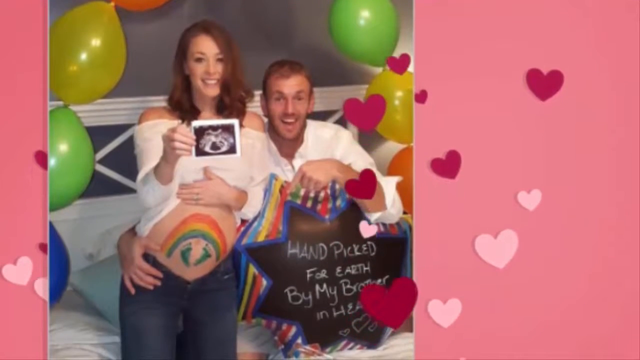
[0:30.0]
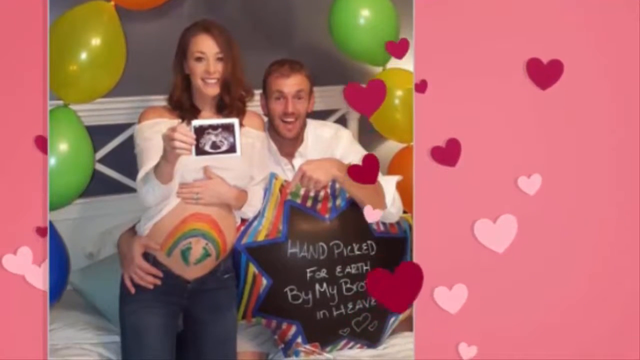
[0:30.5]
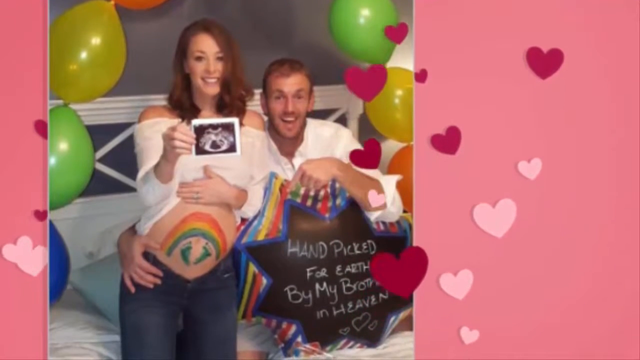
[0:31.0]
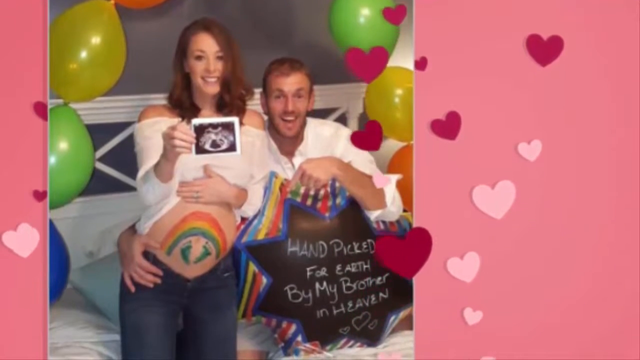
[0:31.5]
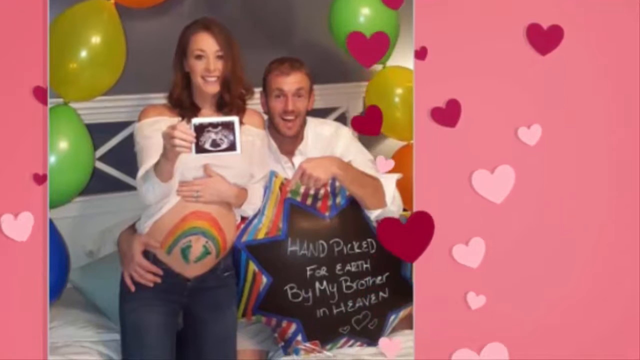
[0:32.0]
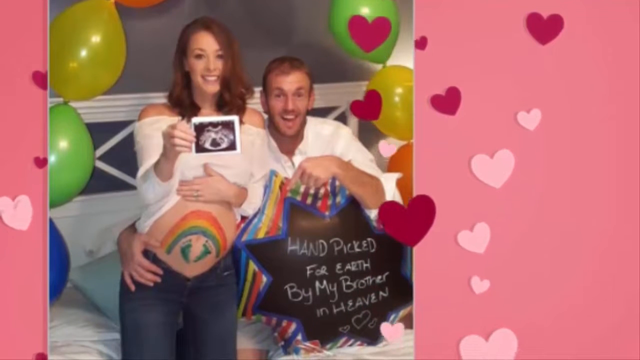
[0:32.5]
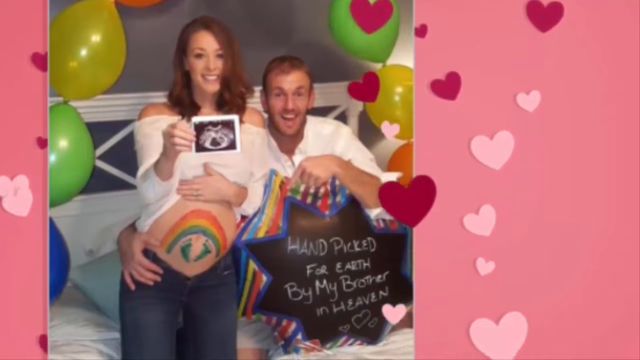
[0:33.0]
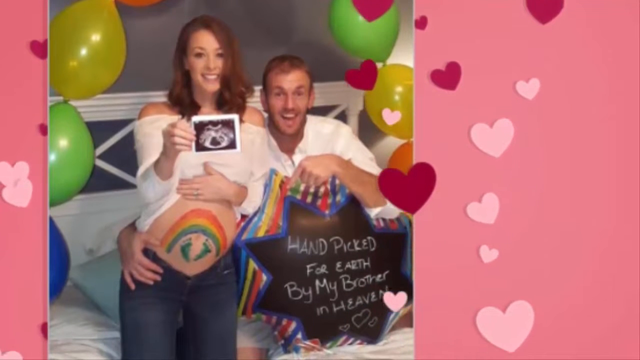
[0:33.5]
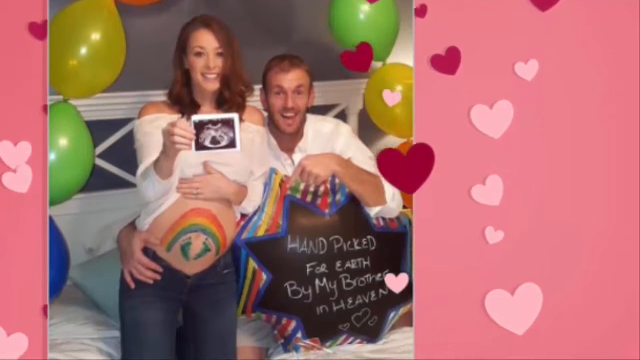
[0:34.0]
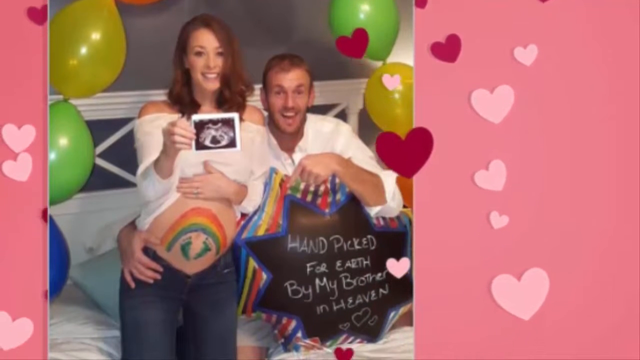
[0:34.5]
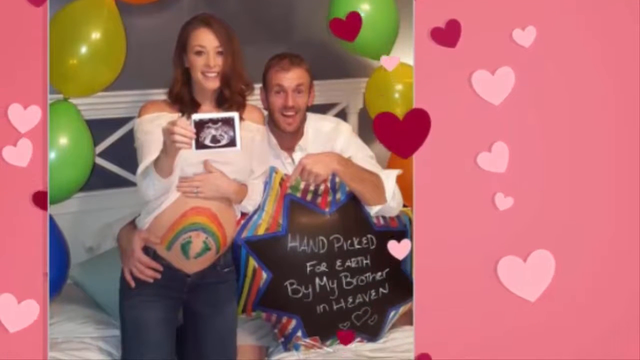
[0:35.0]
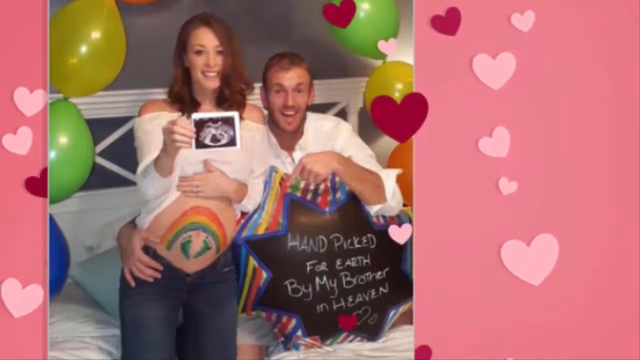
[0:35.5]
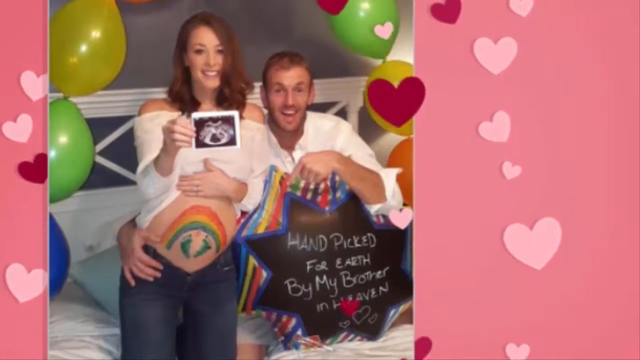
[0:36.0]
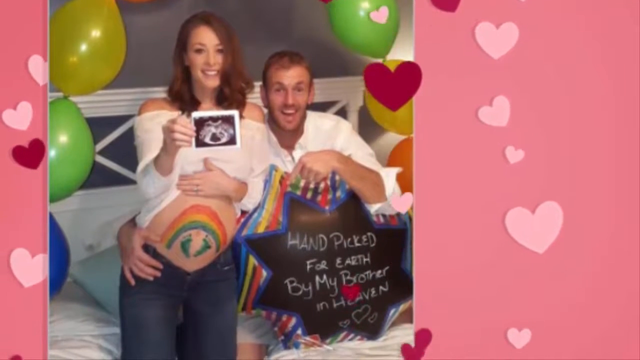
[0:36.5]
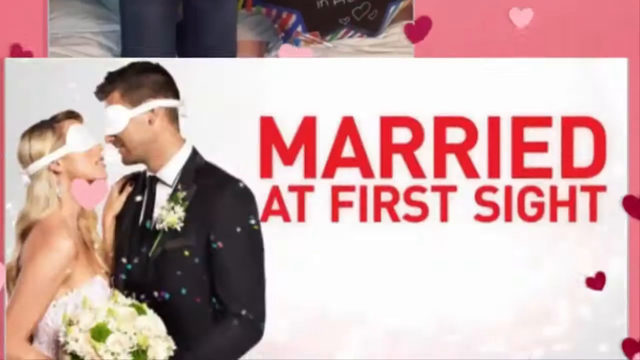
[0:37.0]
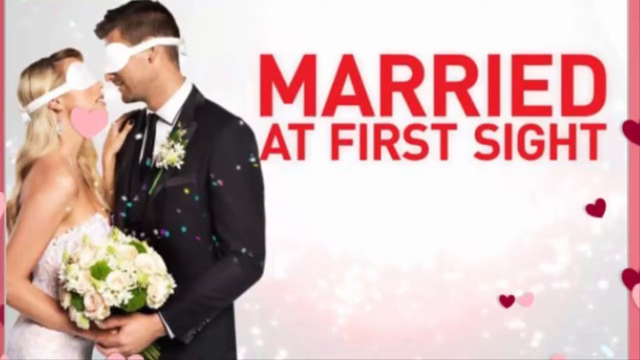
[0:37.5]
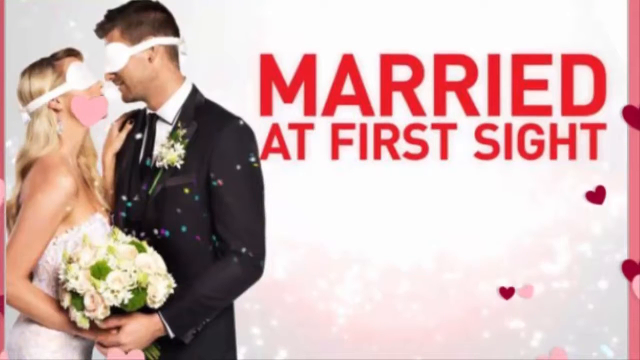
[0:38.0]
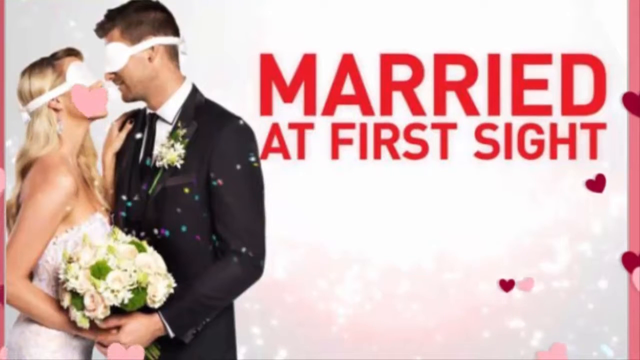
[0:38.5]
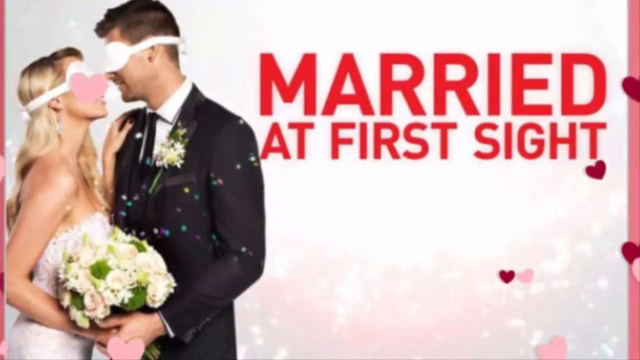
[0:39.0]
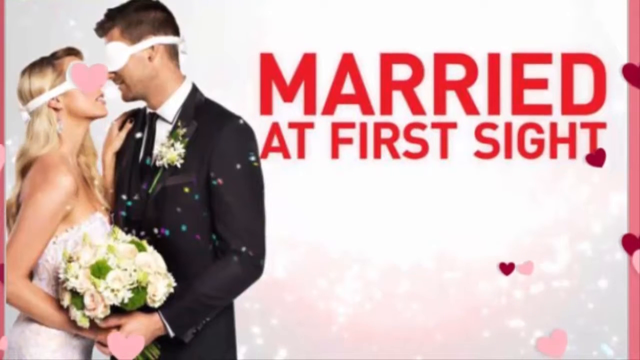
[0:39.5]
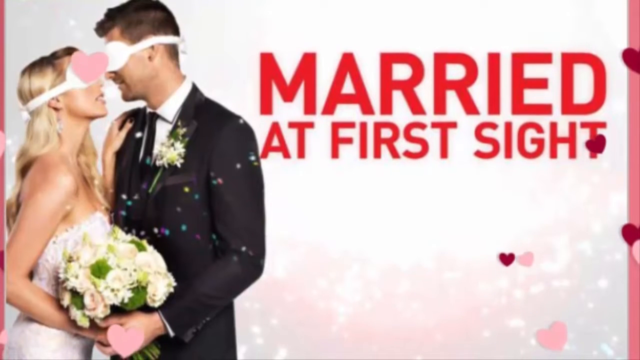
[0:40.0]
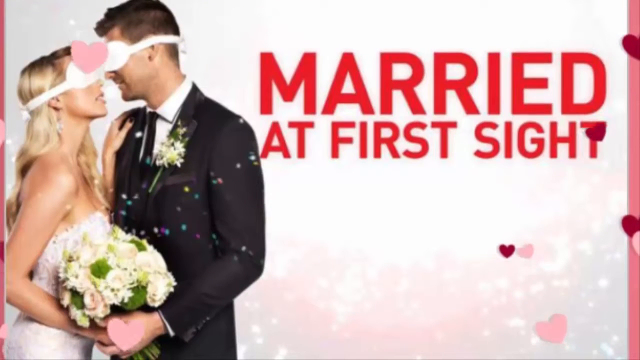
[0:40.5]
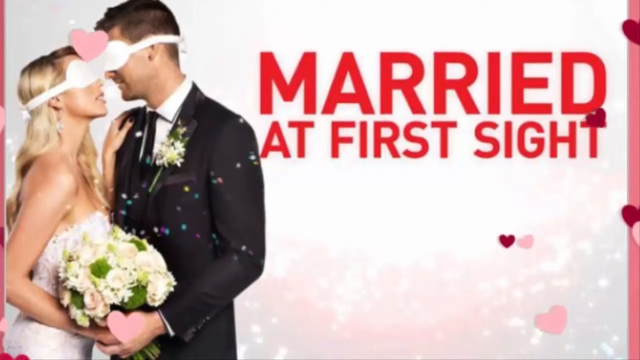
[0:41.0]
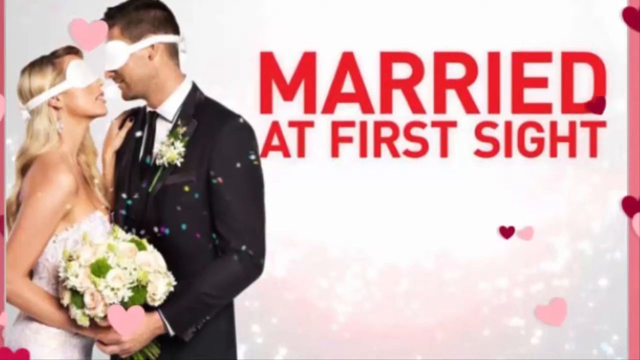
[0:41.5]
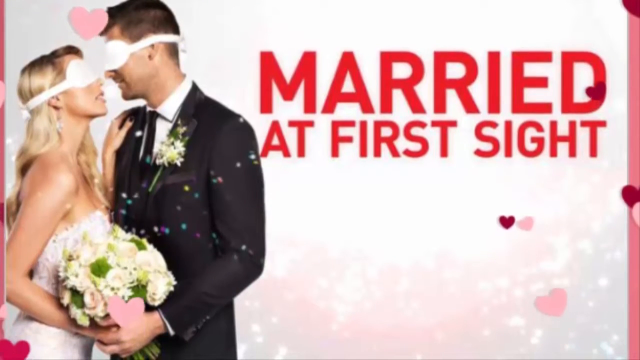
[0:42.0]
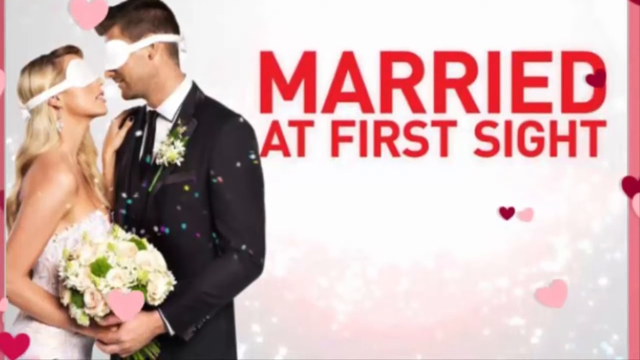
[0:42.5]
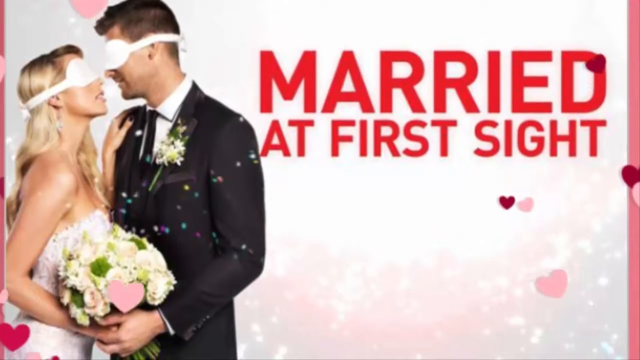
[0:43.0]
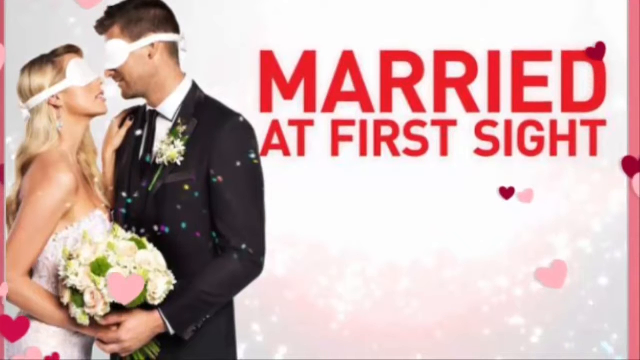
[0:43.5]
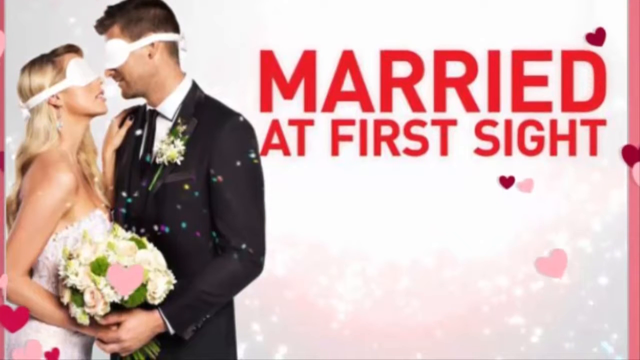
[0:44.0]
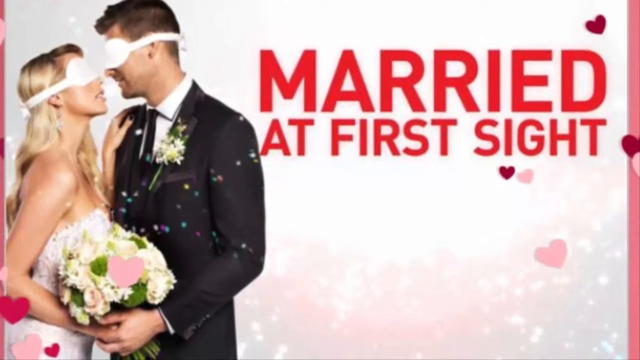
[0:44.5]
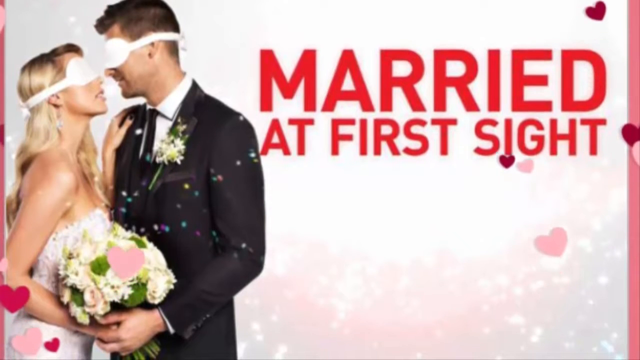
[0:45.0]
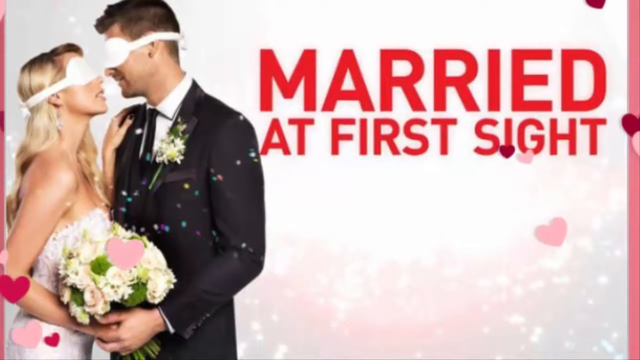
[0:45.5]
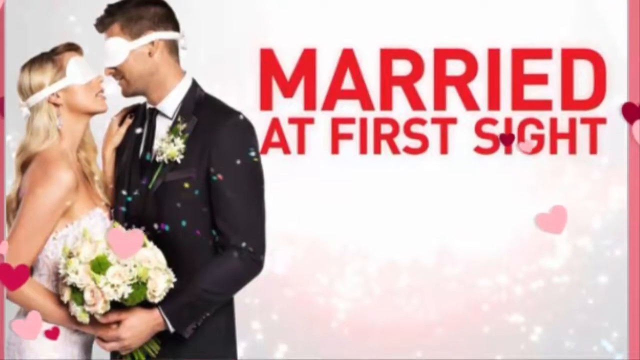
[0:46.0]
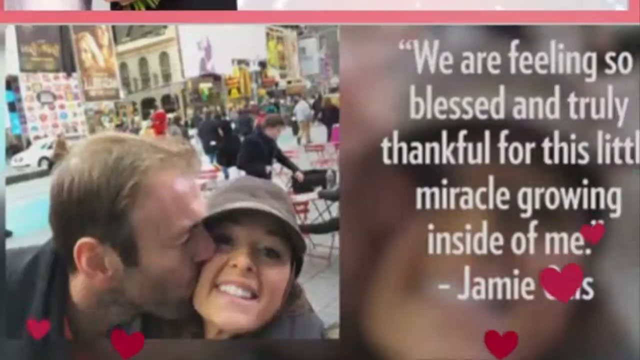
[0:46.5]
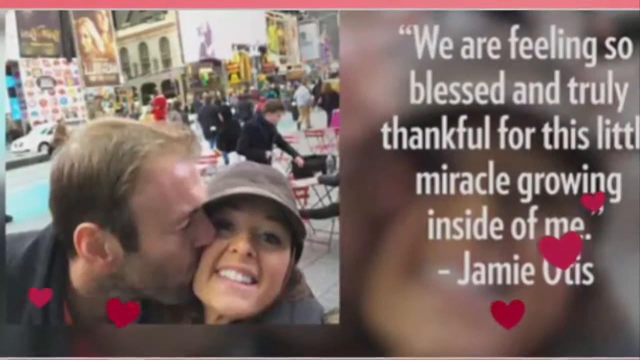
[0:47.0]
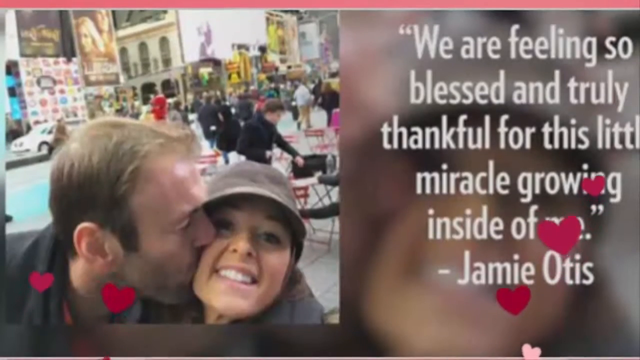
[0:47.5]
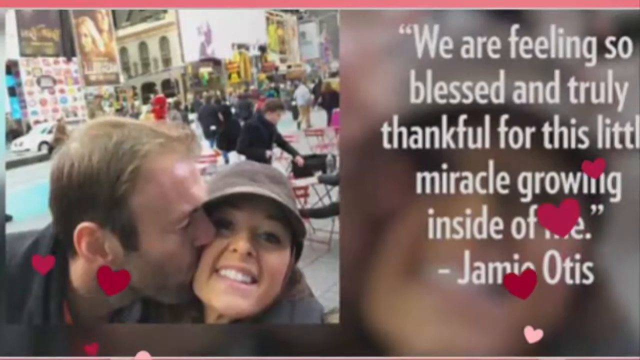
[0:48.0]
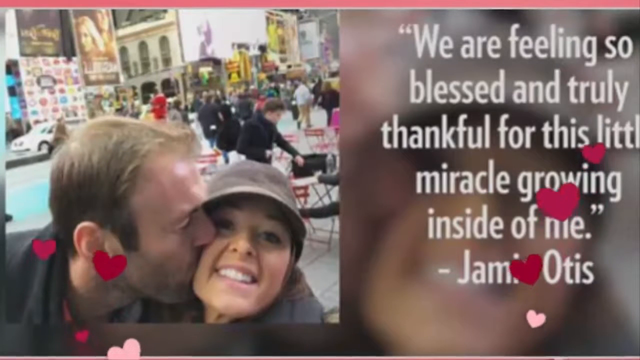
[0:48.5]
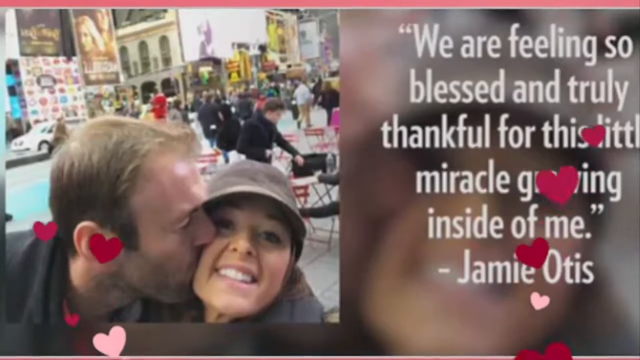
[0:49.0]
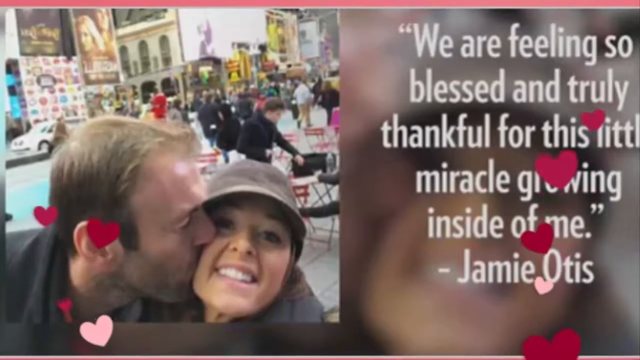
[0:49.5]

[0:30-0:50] A couple seems to be sitting on a bed; one of them holds a picture, possibly black and white, that cannot be seen clearly, and the stomach is drawn with color. Pink and red love images fly through the picture. Another picture shows a man in a black suit and a woman in a pink dress who appear to be holding each other and seem to be wearing spectacles that look like VR glasses. They hold a bouquet of flowers beside them. The caption reads "married at first sight" on a white background, with red and pink love images flying through the video. Another picture shows a man kissing a woman's cheek in a public setting, with a group of people behind them and red and pink love images flying over the picture.